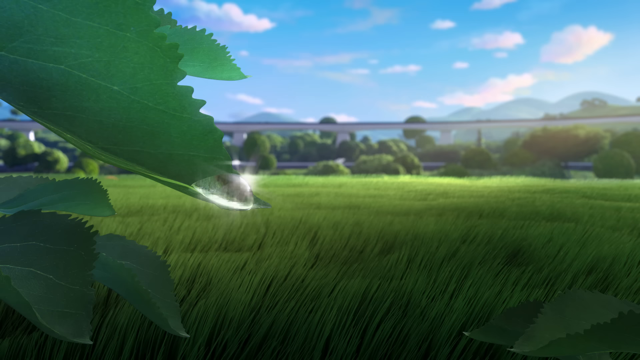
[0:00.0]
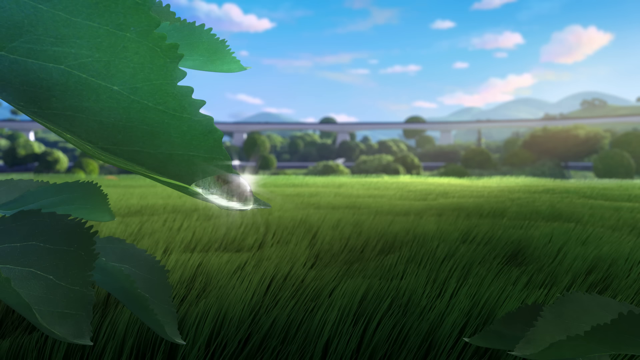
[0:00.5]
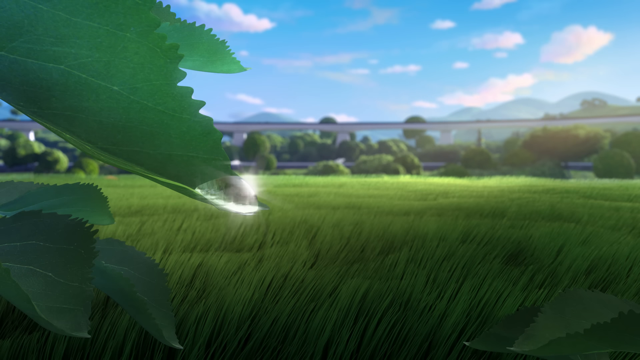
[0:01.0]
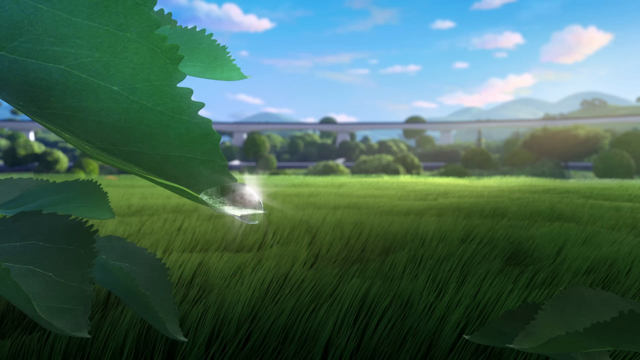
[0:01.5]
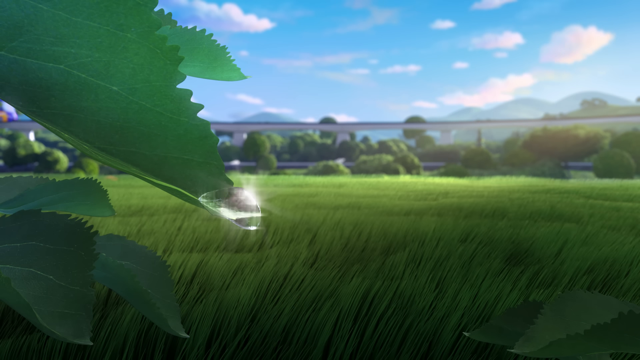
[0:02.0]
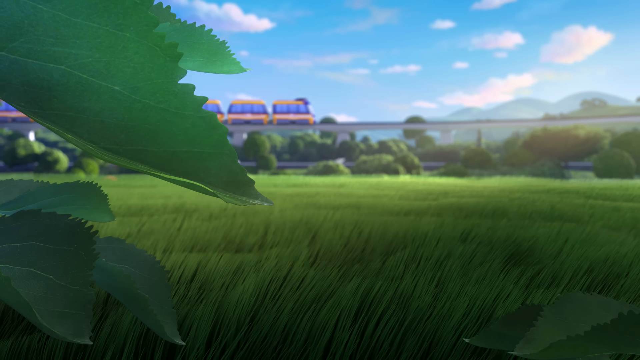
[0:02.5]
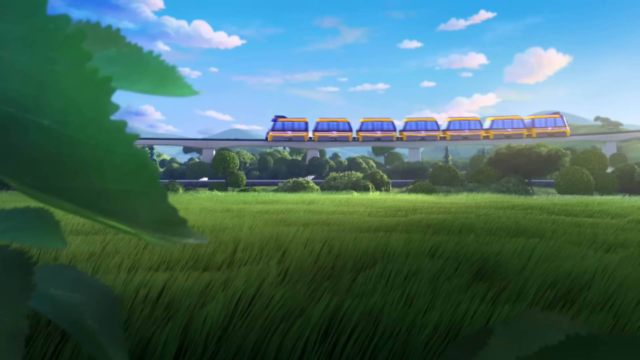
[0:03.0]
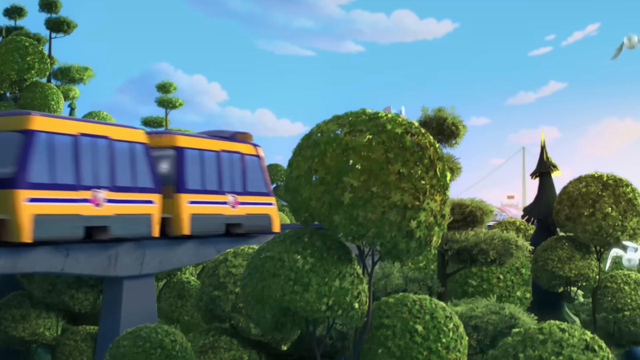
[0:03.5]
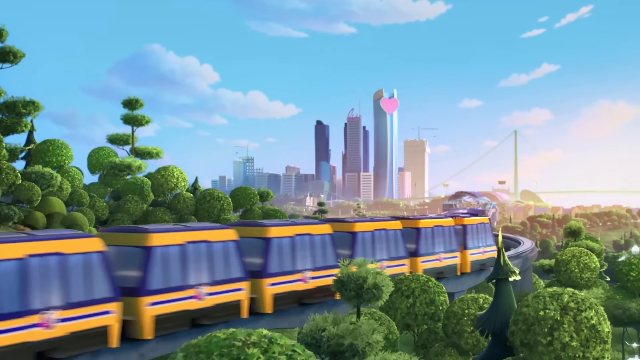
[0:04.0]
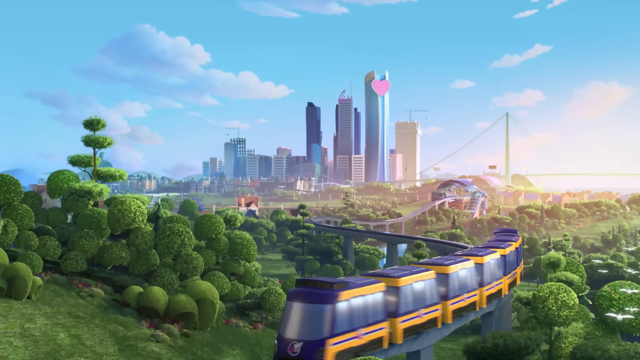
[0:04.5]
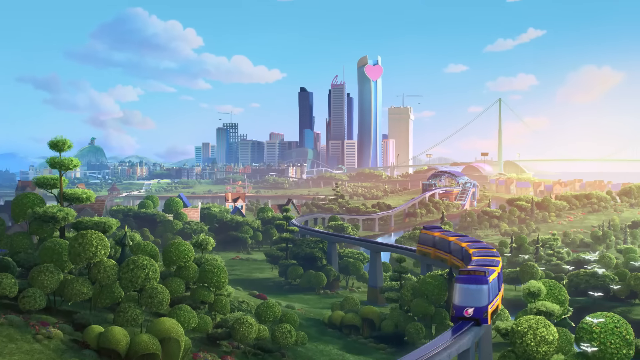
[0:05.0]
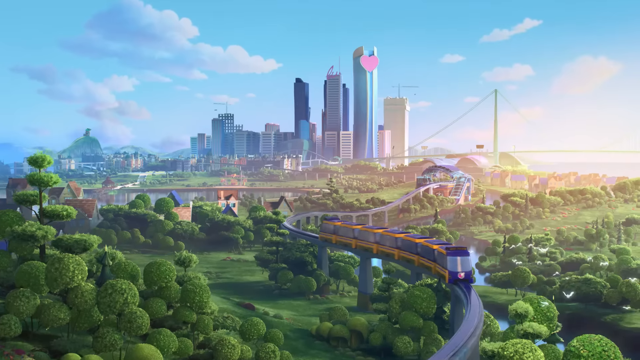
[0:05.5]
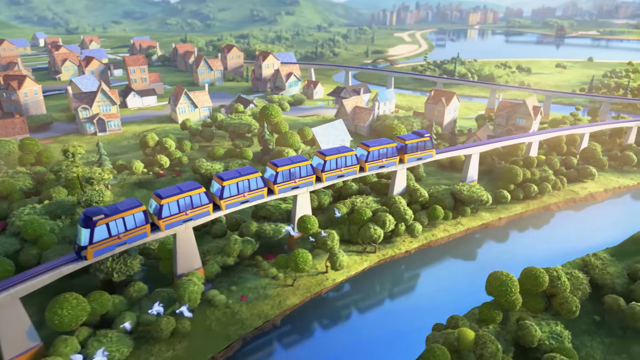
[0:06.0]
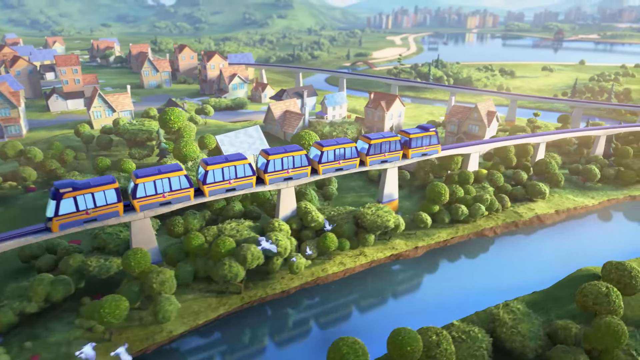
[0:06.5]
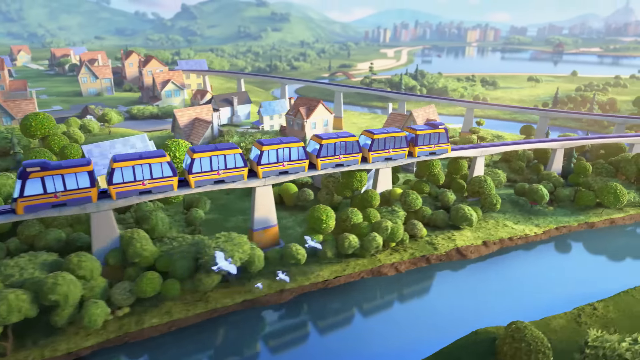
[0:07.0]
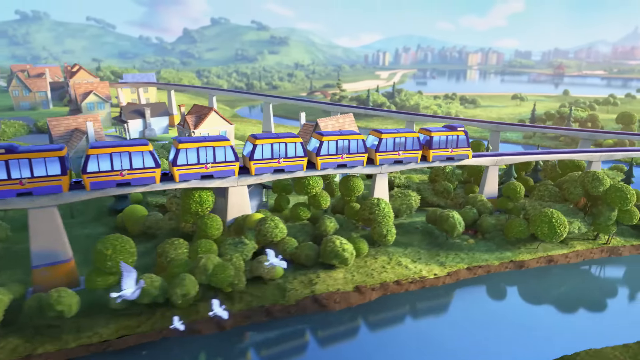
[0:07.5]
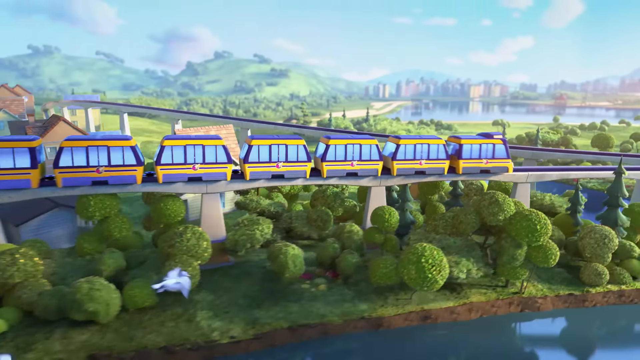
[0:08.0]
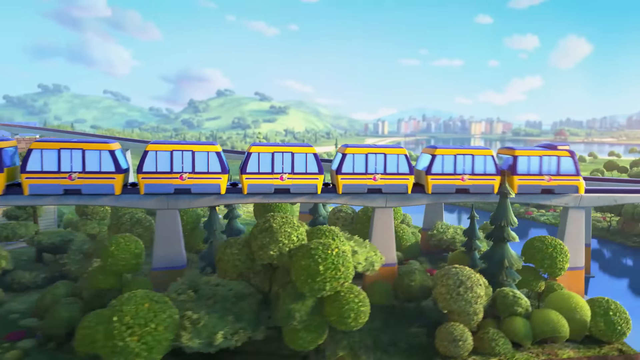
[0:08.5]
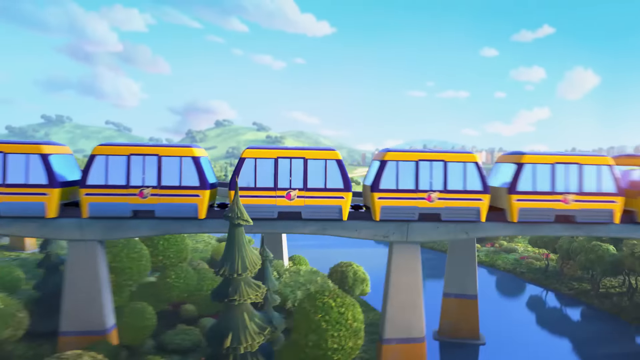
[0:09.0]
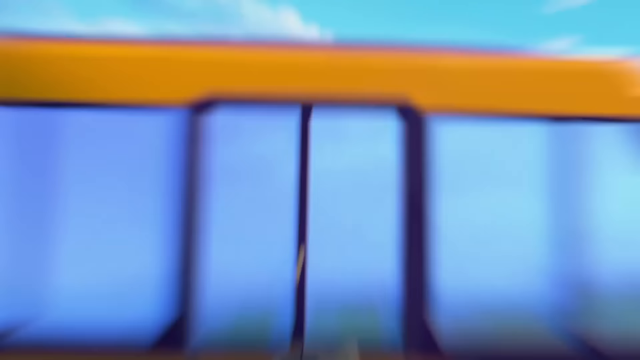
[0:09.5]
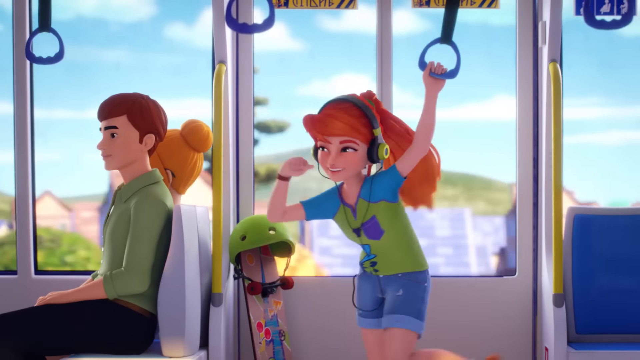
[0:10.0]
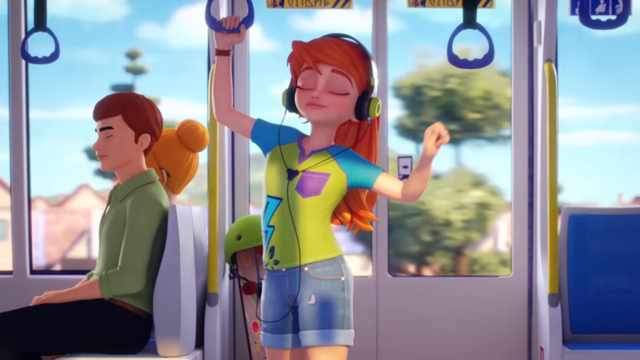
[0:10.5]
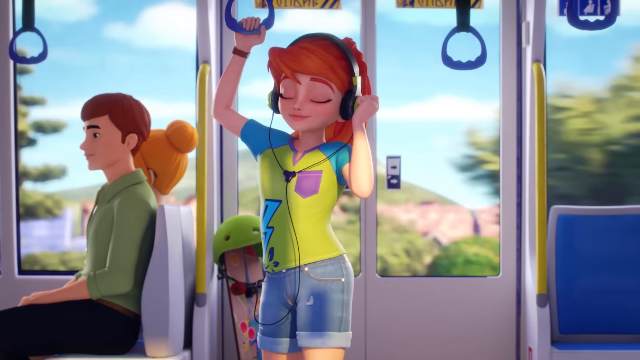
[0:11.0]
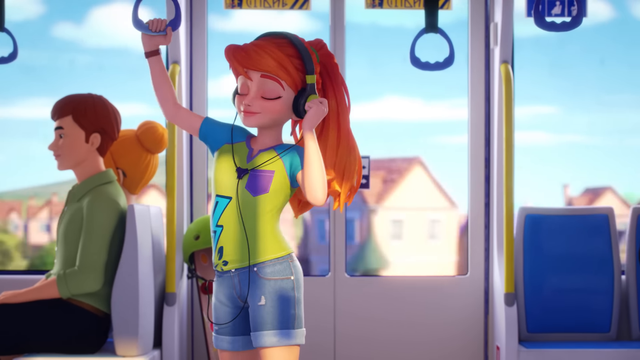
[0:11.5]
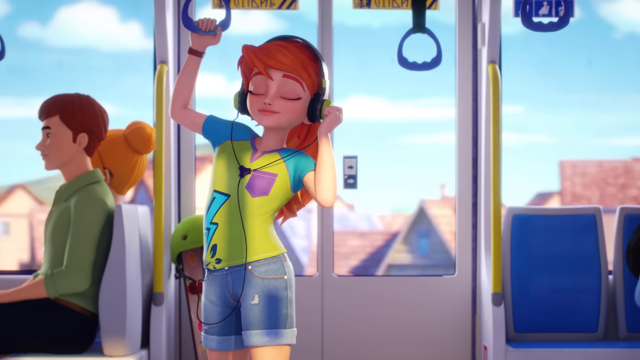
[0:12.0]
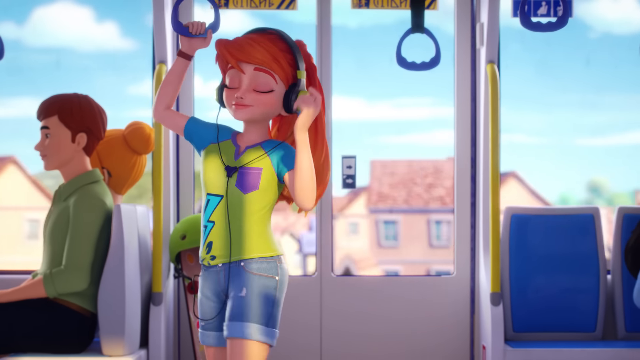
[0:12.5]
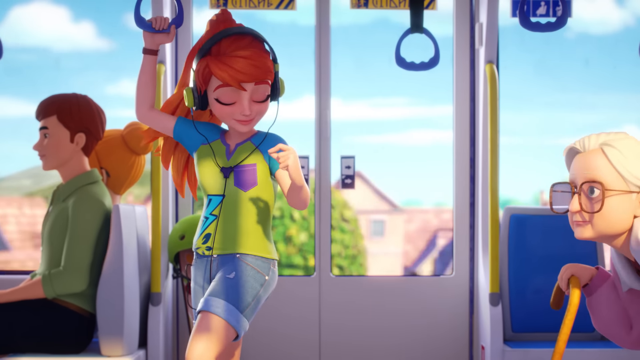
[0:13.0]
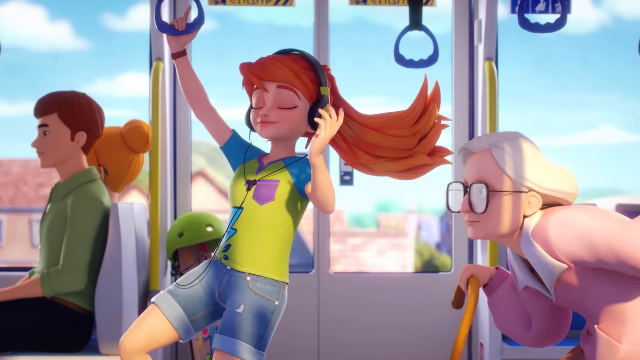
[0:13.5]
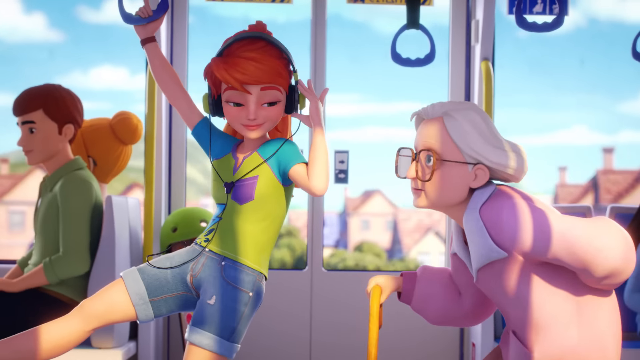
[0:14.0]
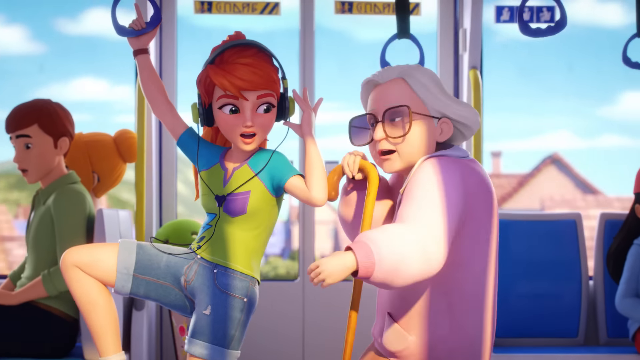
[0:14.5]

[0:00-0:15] A young girl rides a train on what appears to be a sunny day, enjoying her music. She seems to be traveling from the outskirts of the city into downtown. An old woman appears to be approaching to ask her something when the train hits something; there is a bump and everybody is thrown off balance. At the beginning, a leaf with a dew drop is shown.